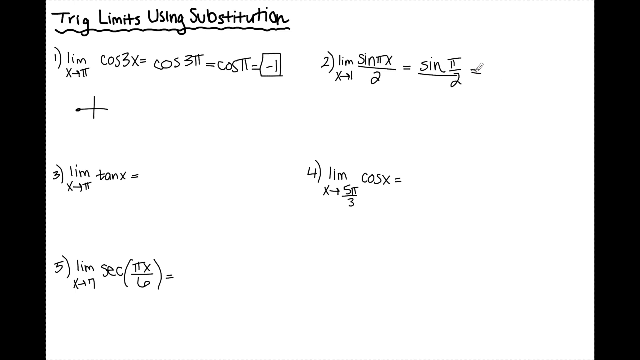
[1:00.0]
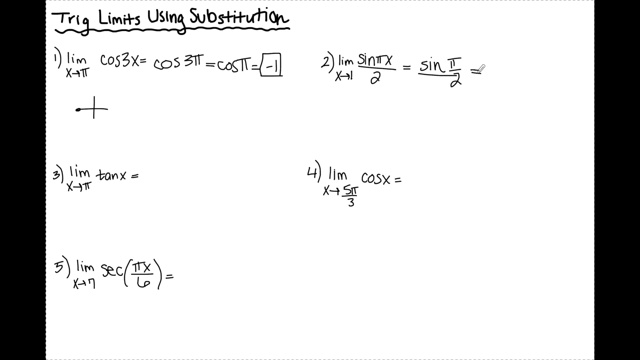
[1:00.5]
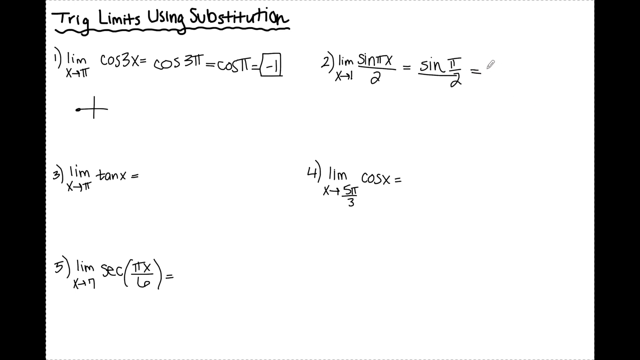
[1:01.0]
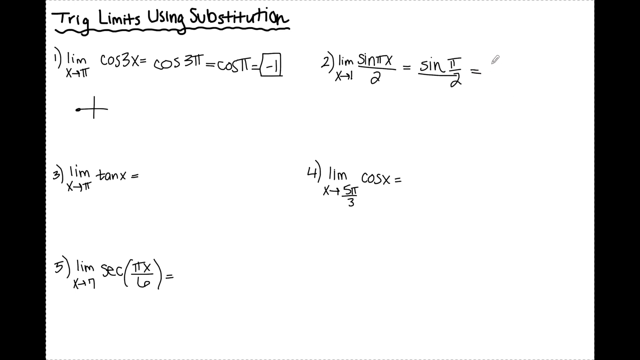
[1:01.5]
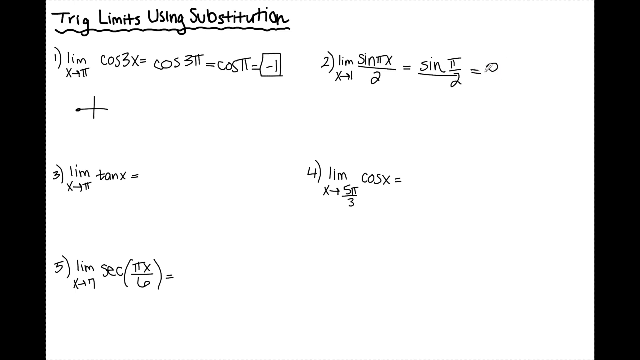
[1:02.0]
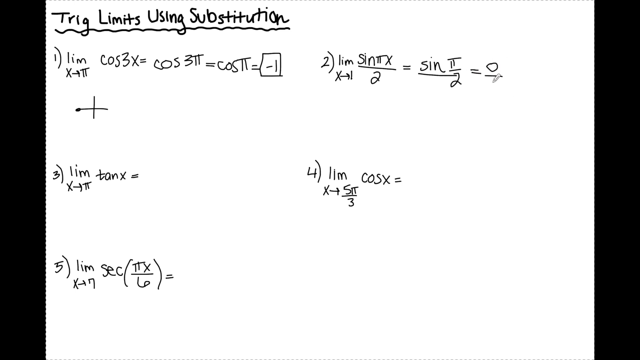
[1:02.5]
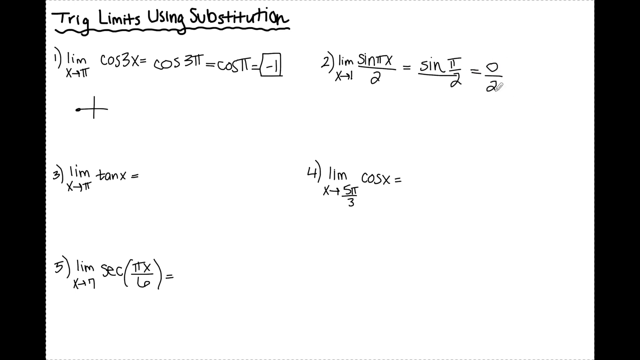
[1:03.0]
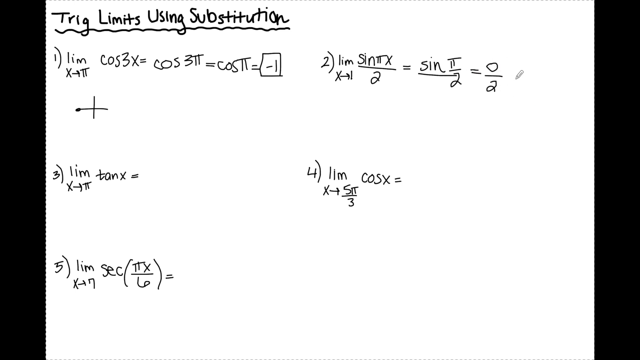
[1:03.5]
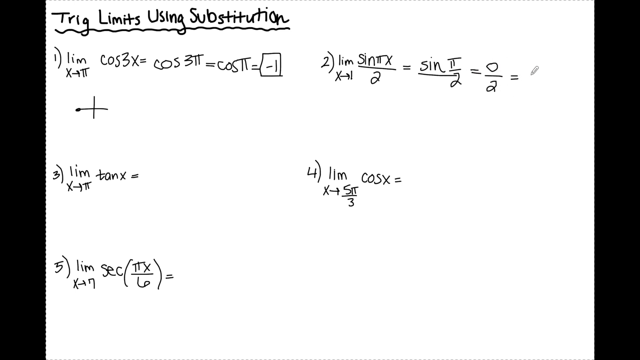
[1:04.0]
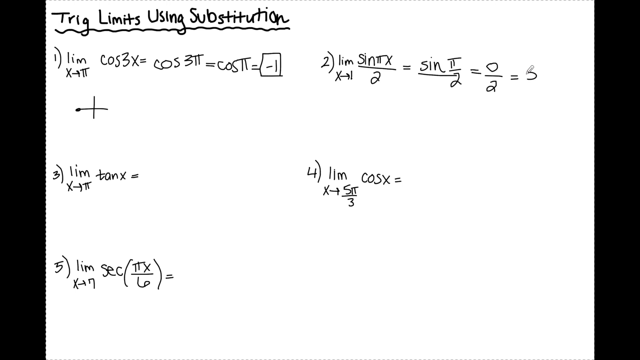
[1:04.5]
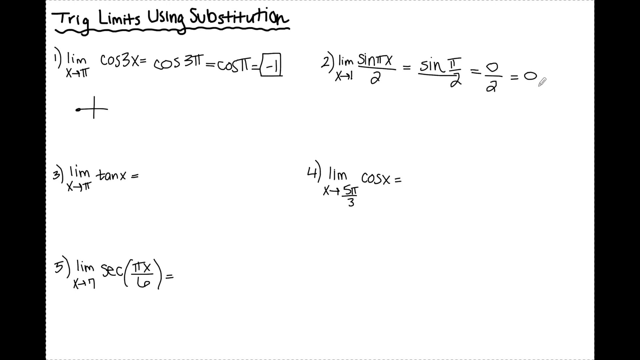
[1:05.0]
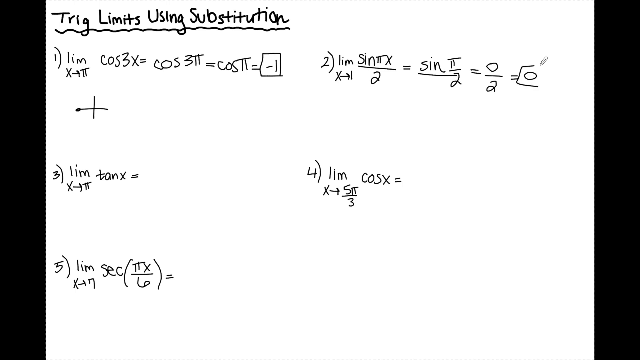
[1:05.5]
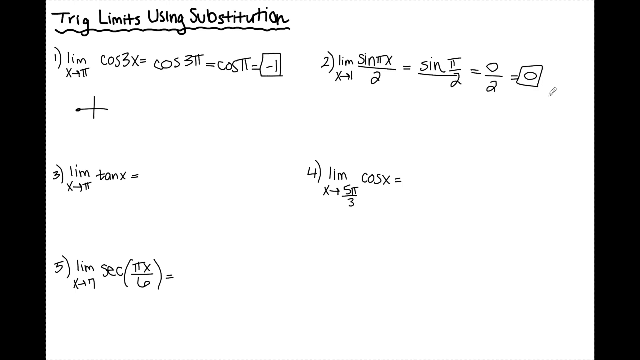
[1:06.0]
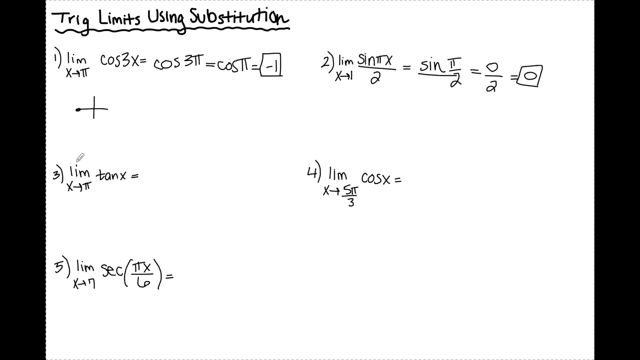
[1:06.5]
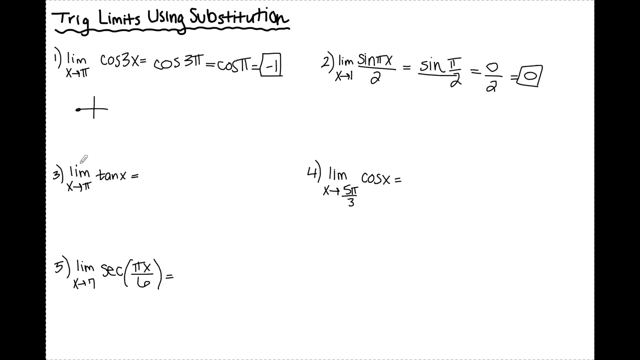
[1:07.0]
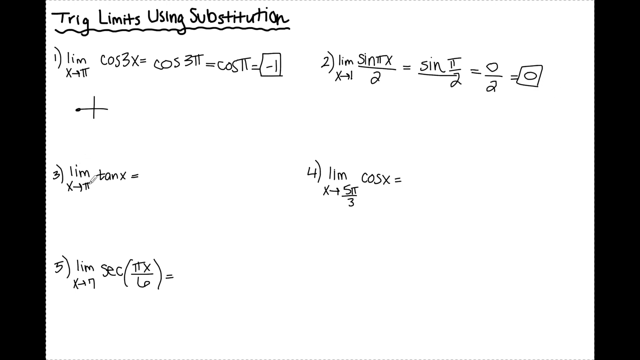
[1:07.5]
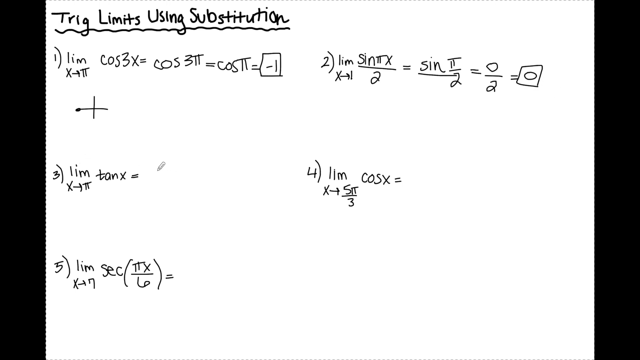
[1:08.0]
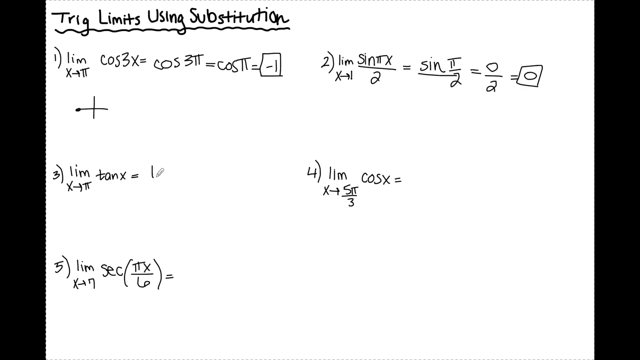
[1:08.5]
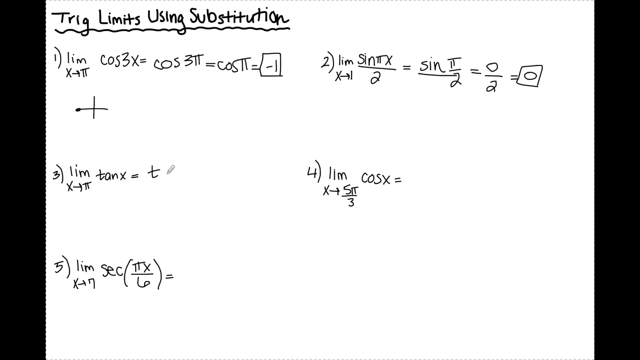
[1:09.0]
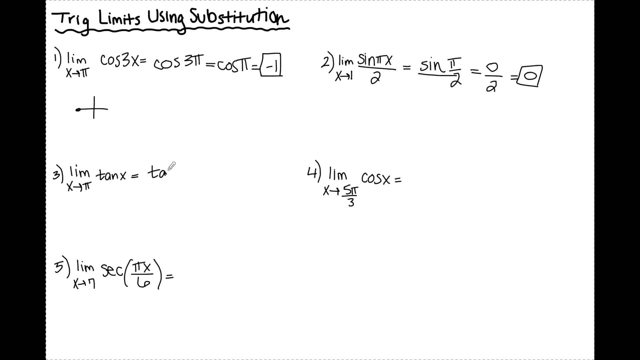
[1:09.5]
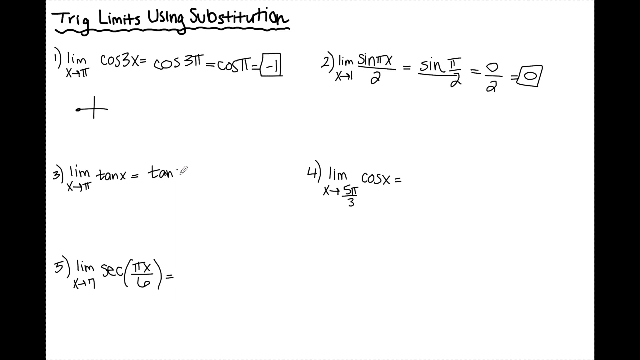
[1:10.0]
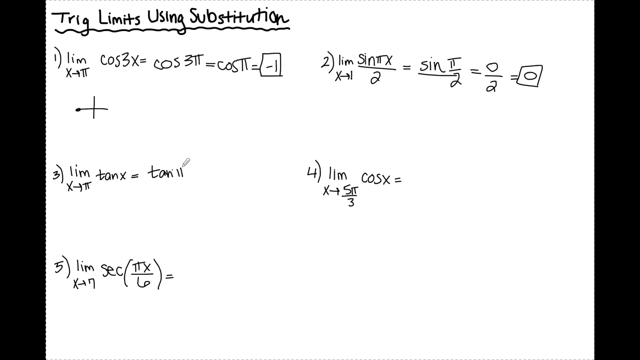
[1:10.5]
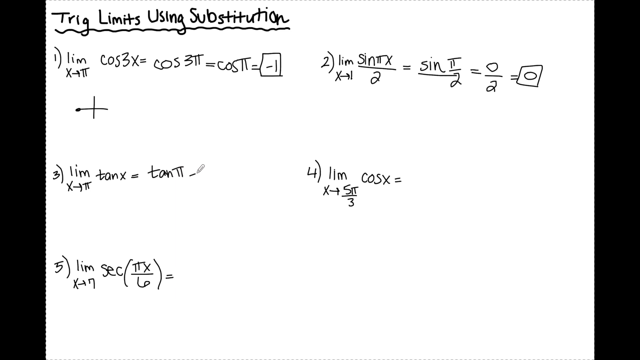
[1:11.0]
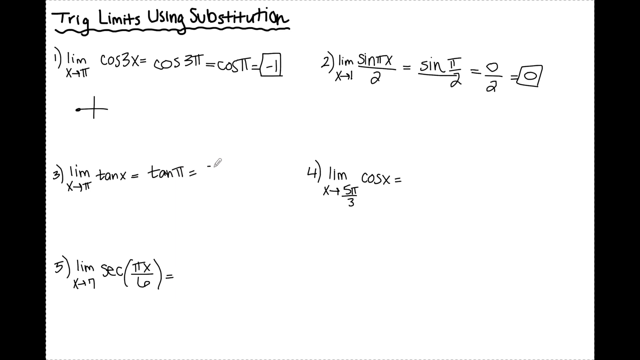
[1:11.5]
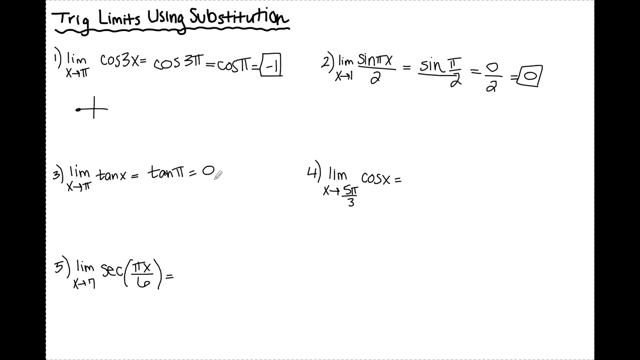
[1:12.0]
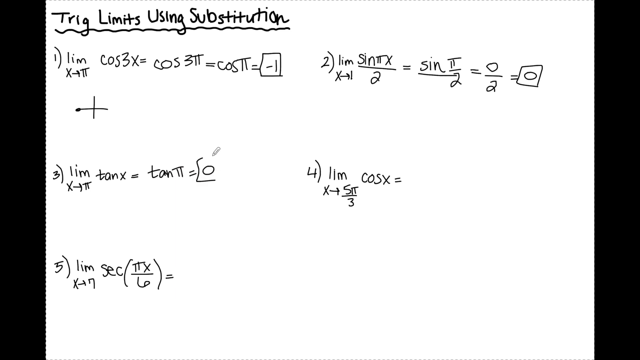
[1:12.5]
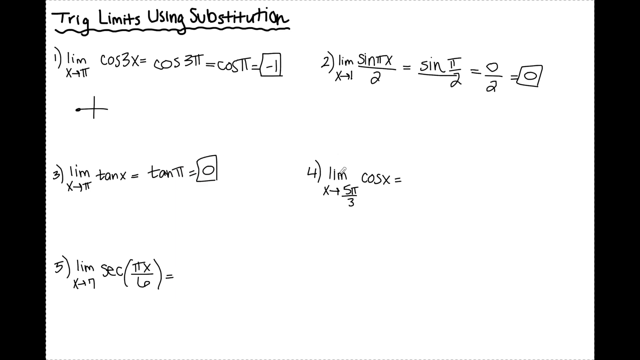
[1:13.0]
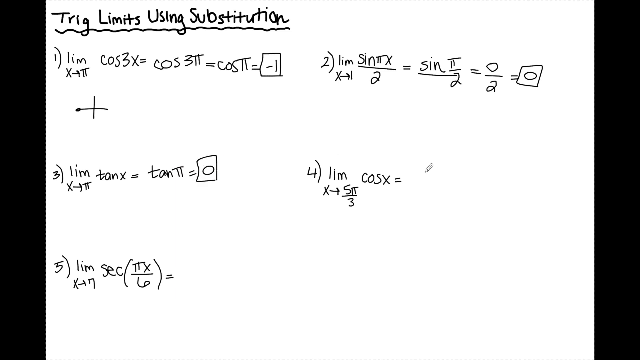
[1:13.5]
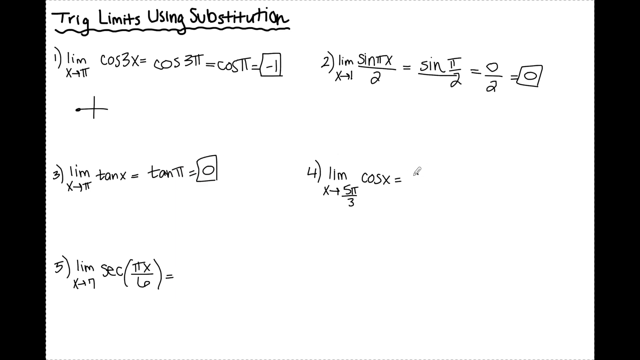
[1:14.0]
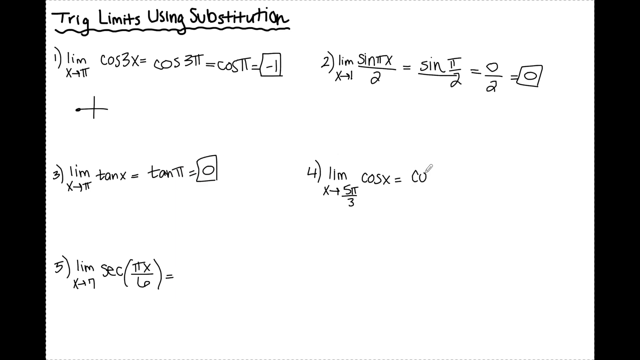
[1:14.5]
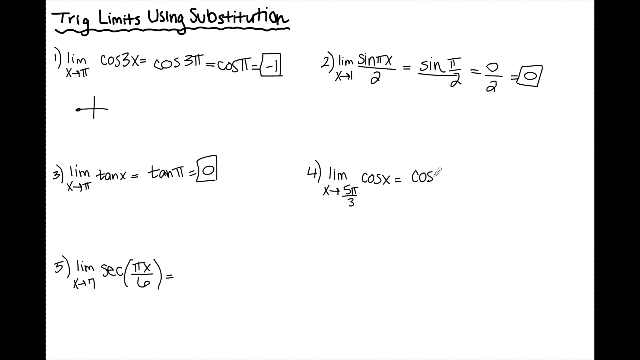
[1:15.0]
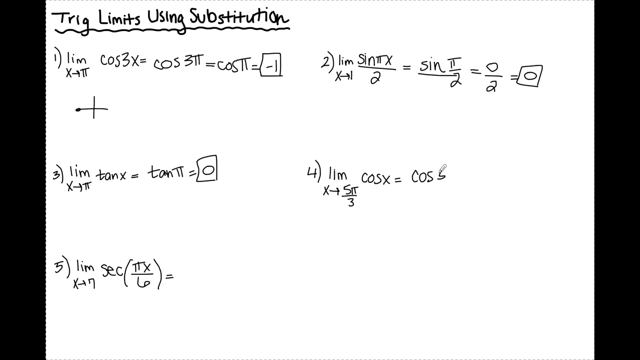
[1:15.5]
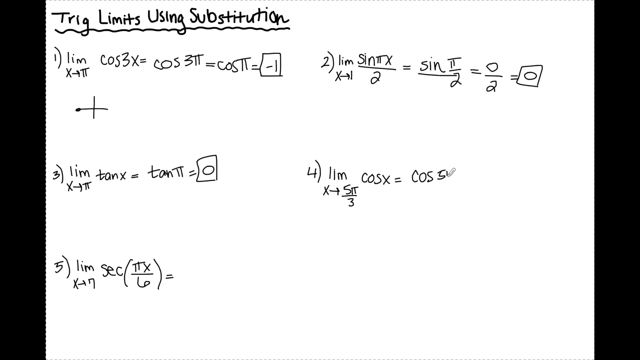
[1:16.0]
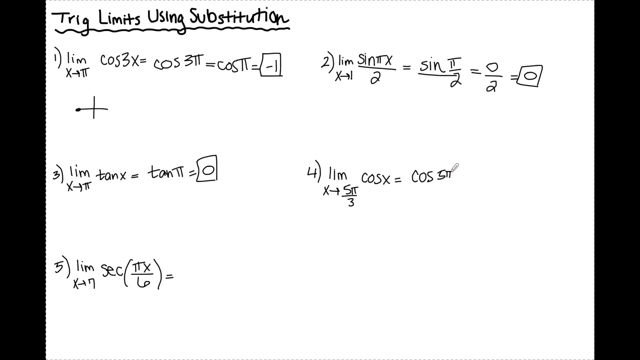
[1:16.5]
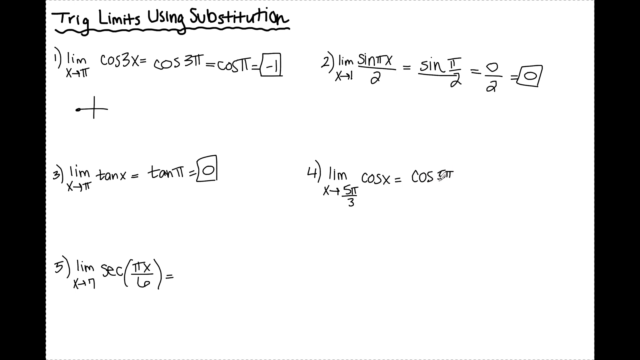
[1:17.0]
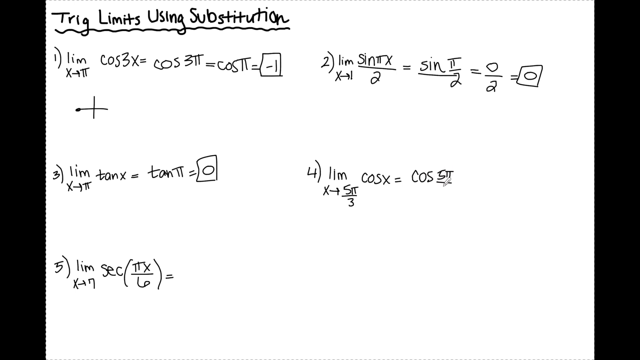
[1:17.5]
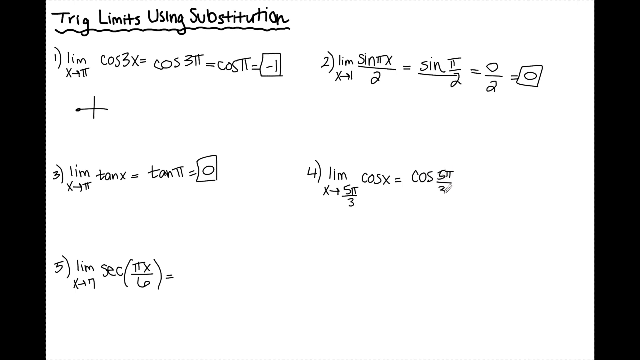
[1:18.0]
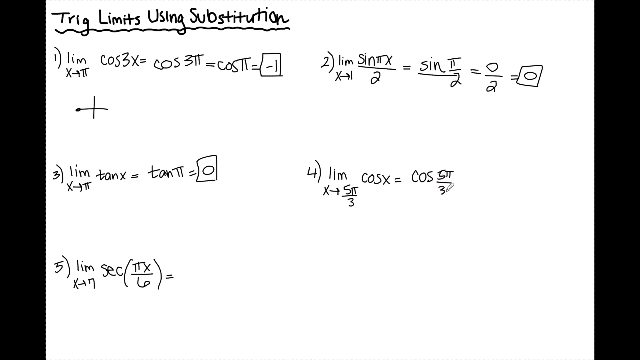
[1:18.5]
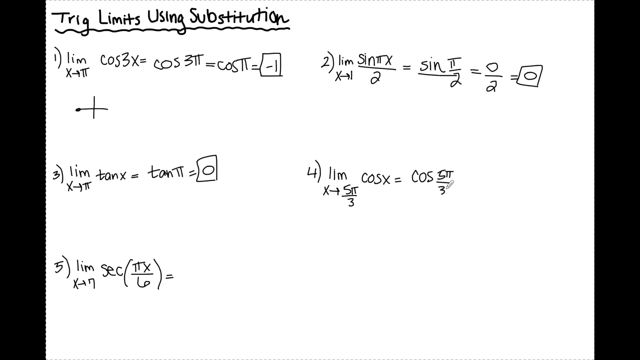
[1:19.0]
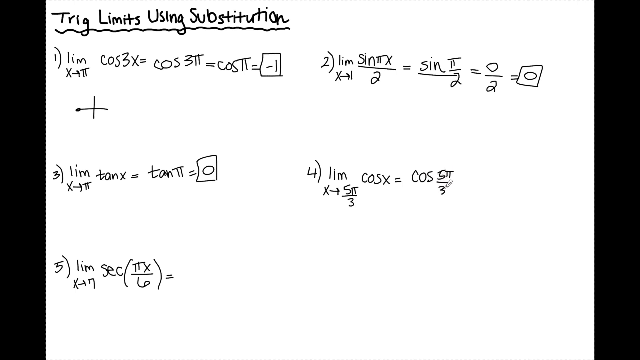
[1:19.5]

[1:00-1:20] The cursor finishes the equals sign after the sine over pi divided by two equation and writes zero divided by two as a fraction, then another equals sign followed by a zero. It draws a box around the zero, as in equation one. The cursor moves from the right side of the screen to the left and down to equation three, where it writes tan pi equals zero after the equals sign and then boxes the zero, completing the equation. It then moves to the right side of the screen to equation four and, as with the others, writes next to the equals sign, this time cosine five pi divided by three. The writing is still in progress as the segment ends.